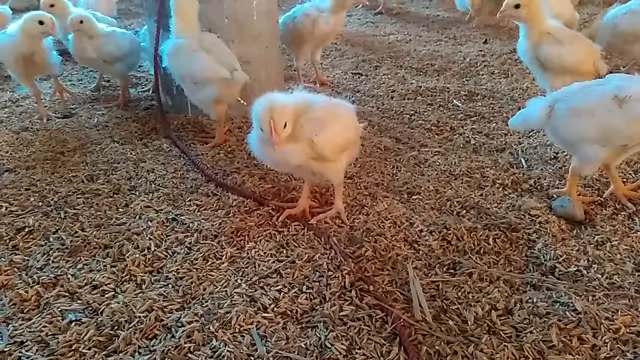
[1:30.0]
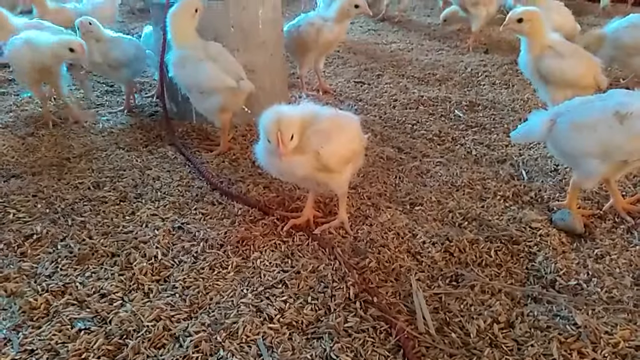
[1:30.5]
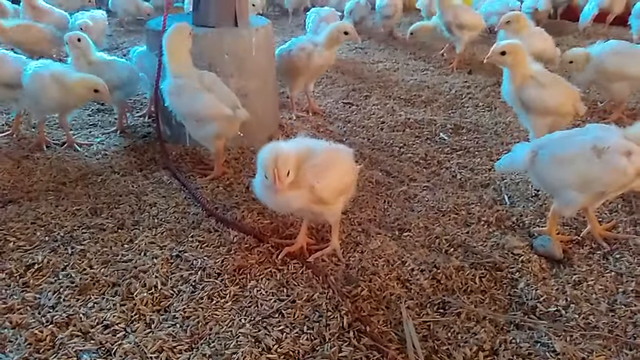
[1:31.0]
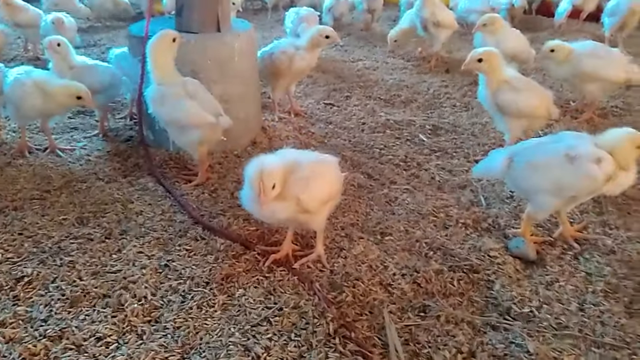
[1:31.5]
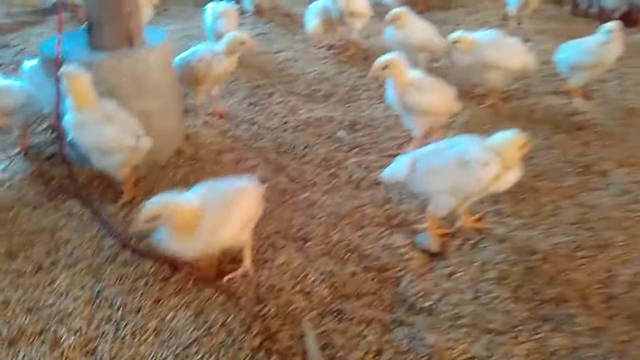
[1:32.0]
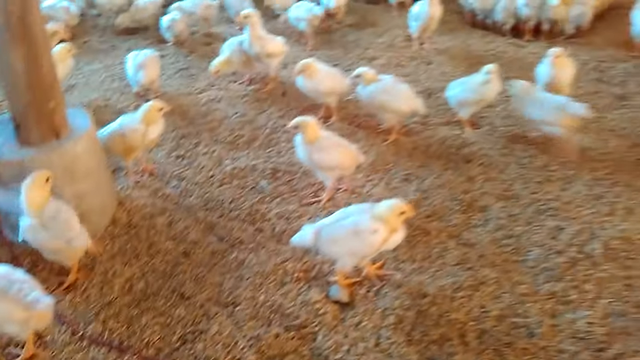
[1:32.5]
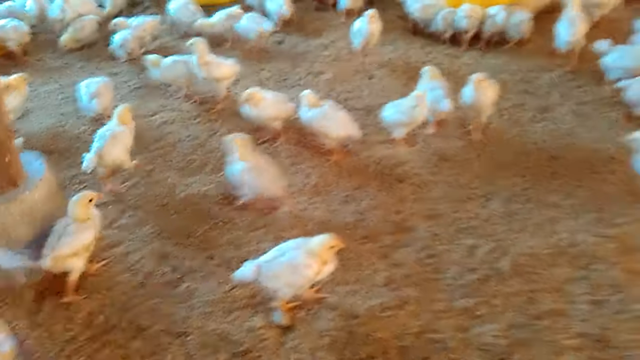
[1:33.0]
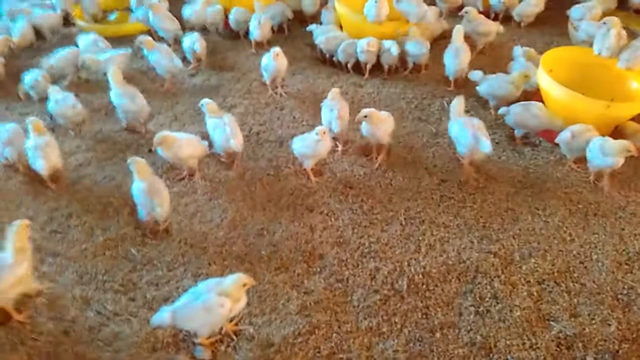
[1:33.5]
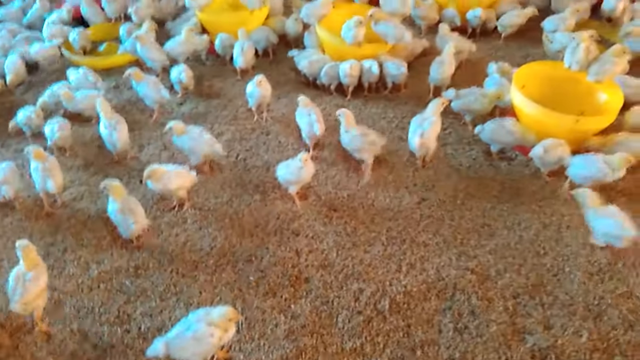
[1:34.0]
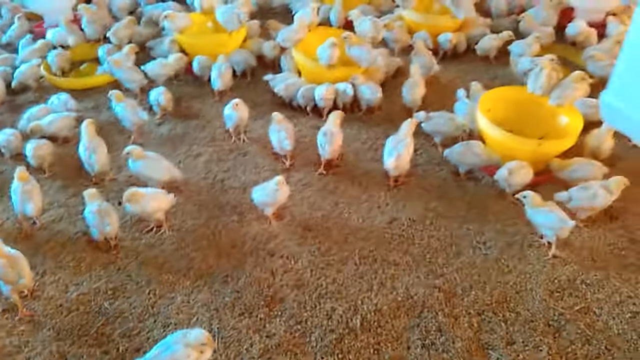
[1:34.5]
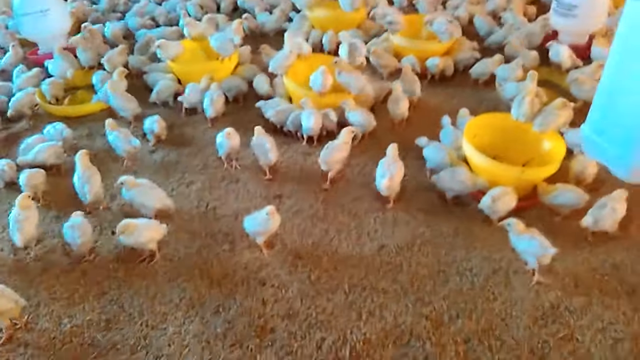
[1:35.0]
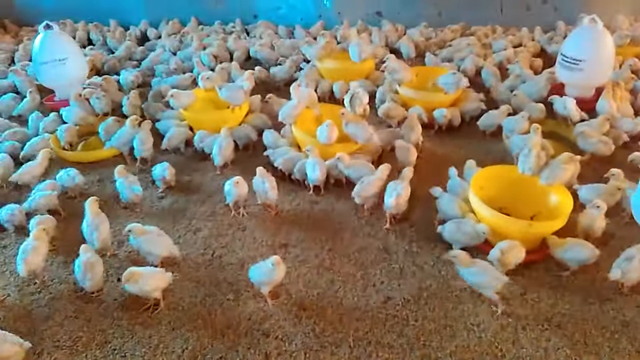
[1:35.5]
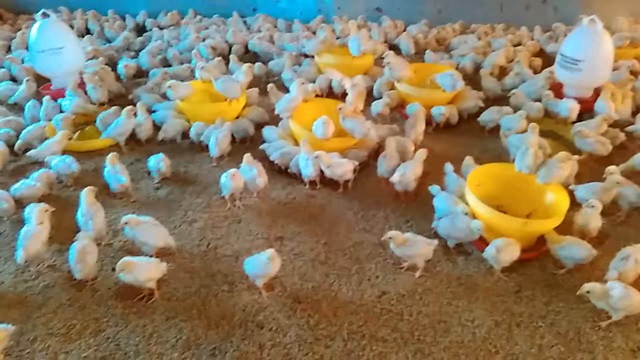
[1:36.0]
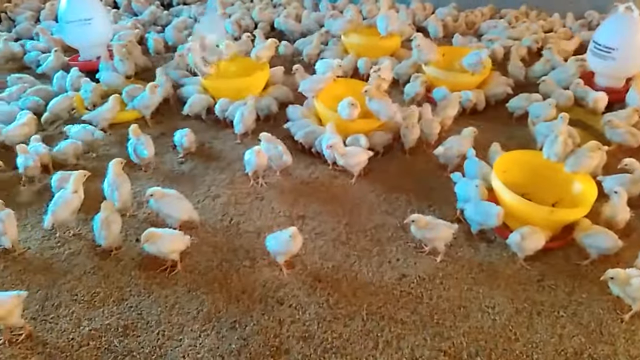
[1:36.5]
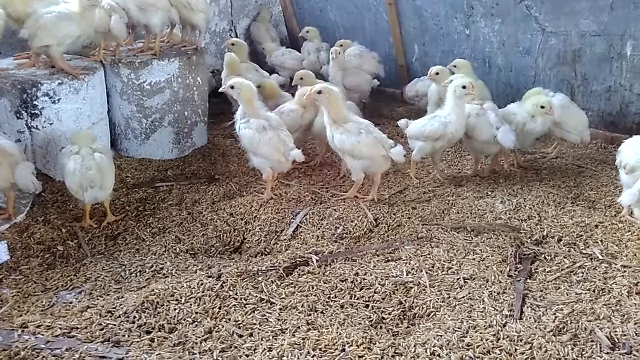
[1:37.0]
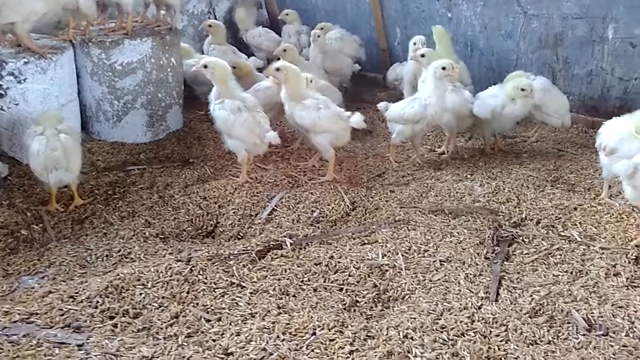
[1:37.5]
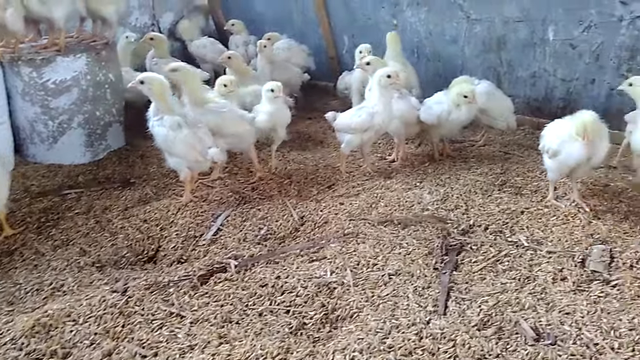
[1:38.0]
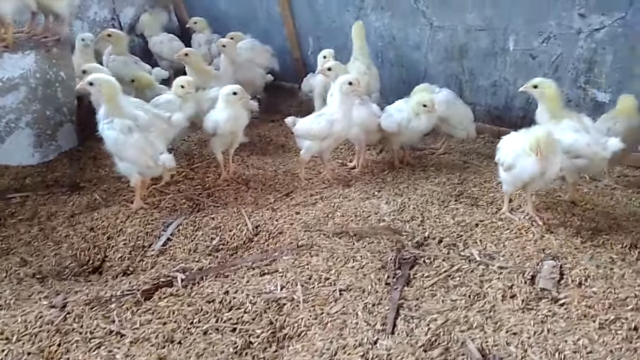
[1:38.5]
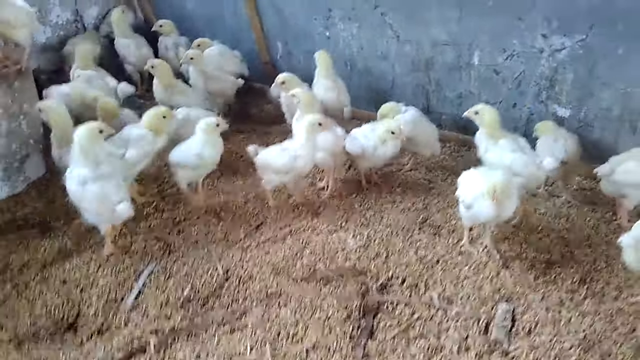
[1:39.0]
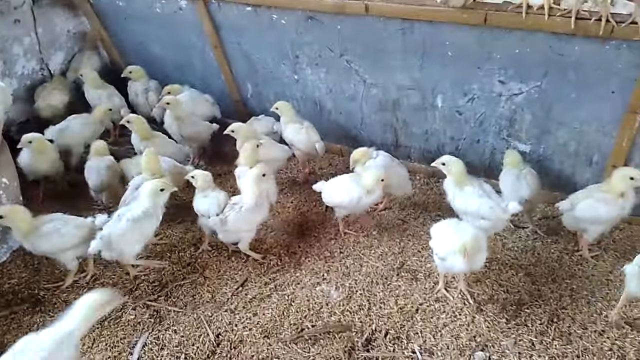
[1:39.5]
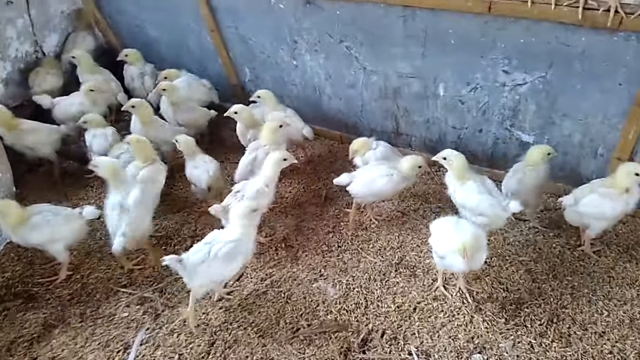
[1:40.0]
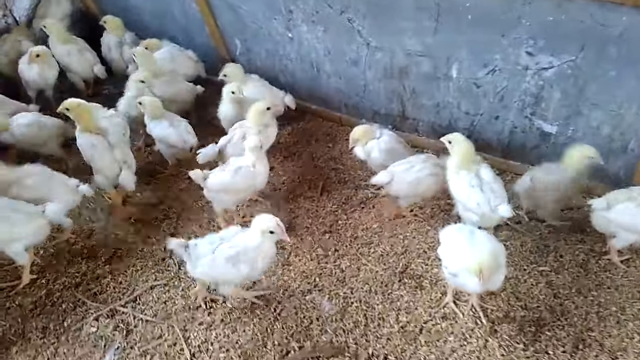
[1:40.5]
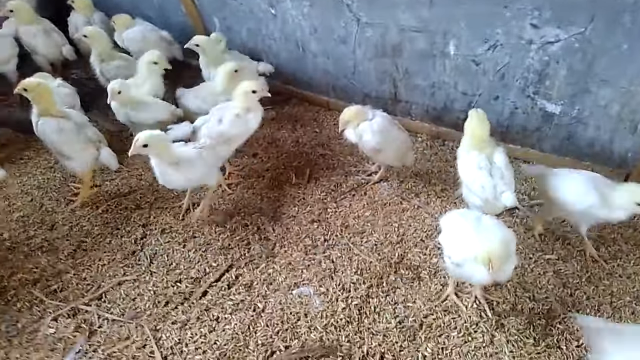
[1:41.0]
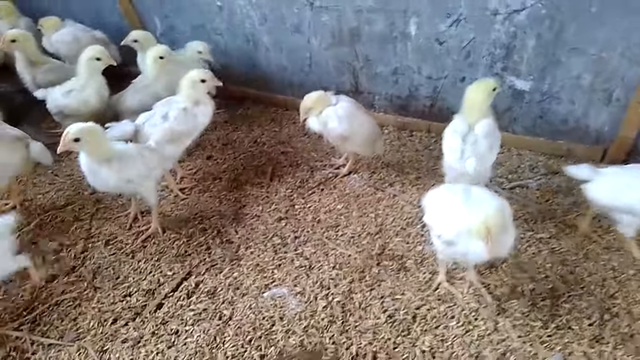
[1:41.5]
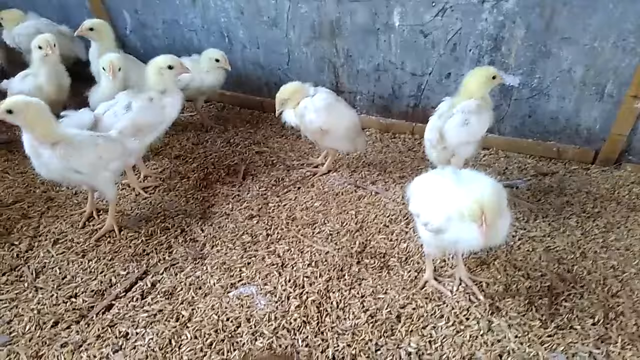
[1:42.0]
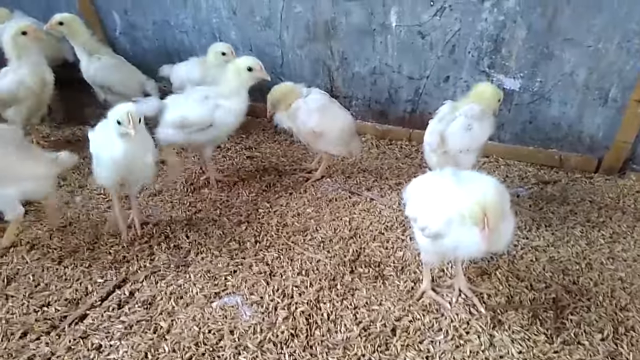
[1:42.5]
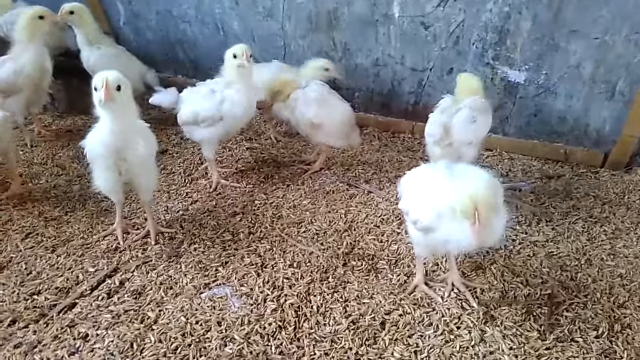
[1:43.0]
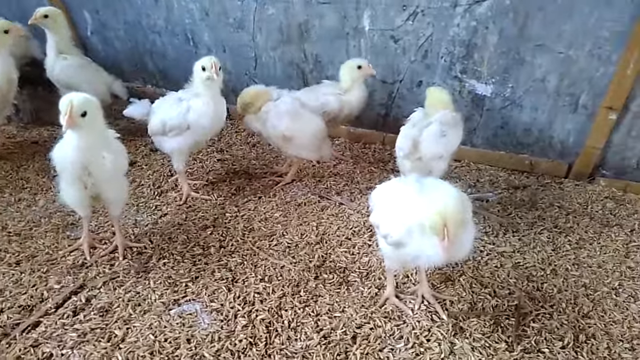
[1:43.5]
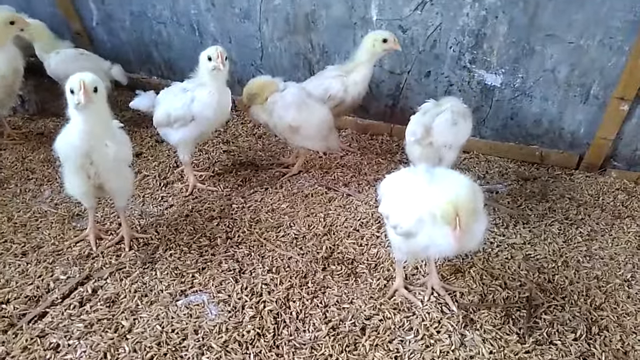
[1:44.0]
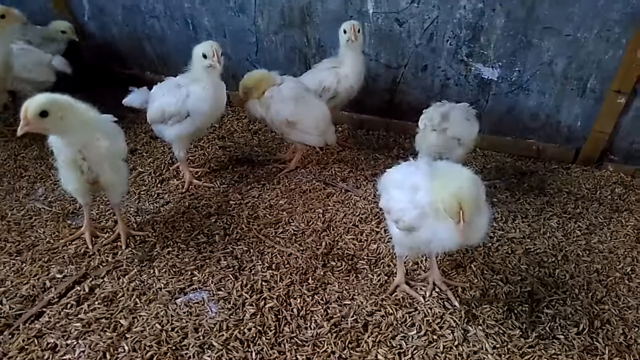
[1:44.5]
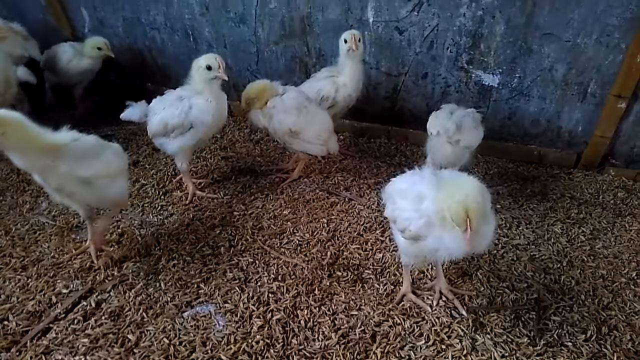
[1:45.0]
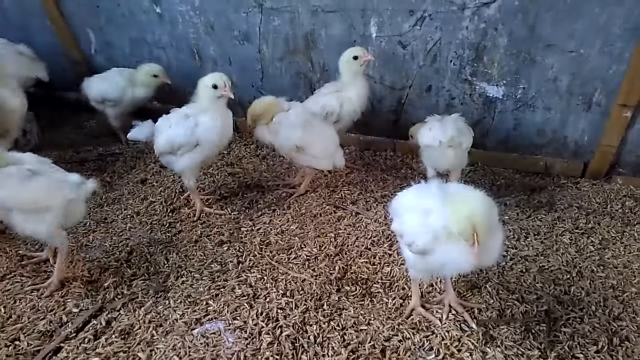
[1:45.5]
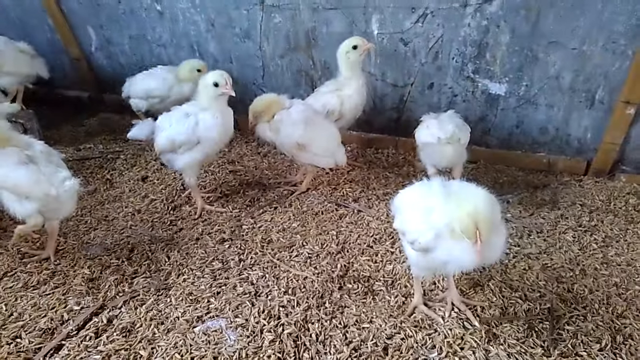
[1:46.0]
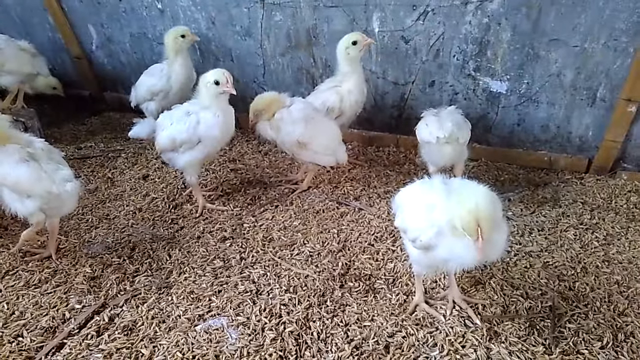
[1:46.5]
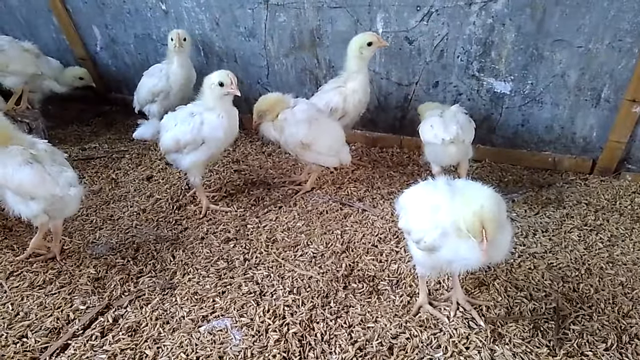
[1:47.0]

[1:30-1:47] A chick stands frozen in place, looking at the camera and staying motionless while the chicks around it move as normal. As the camera operator lifts the camera and starts to pan away, that chick, visible in the corner of the screen, suddenly becomes mobile and runs off to the left. As the camera looks toward the chicks on the right, it becomes clear this is a very large room holding a great number of chicks: possibly a hundred or more, with two drinking pots, at least seven or eight feeding trays, and big white-blue walls in the back. The video then cuts to another group of baby chicks in a barn area, which looks like it might be a different barn since the wall is concrete, and some chicks stand on small concrete bricks to be taller than the others. The camera pans up a little and zooms in on a specific chick that stands still while the chicks around it keep moving as normal.